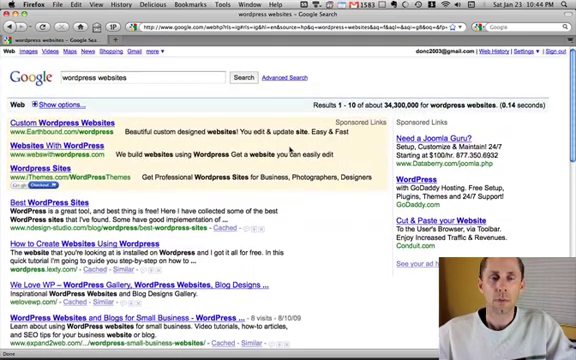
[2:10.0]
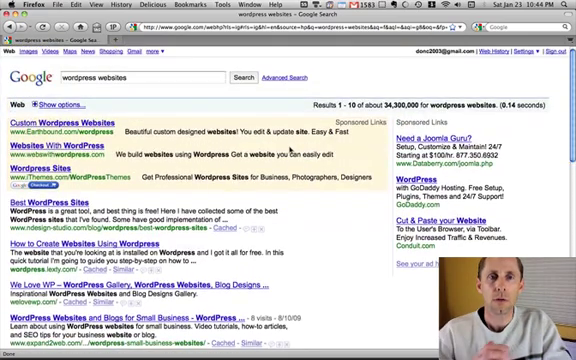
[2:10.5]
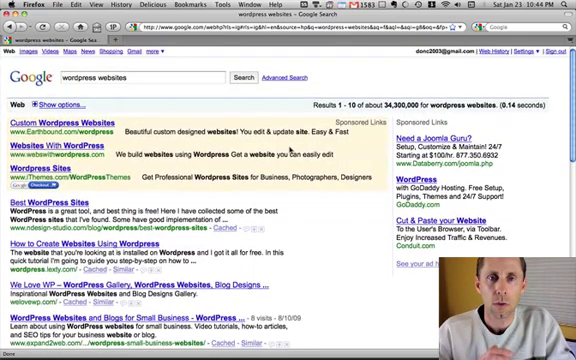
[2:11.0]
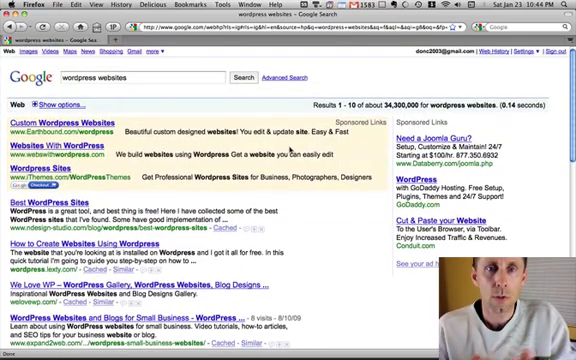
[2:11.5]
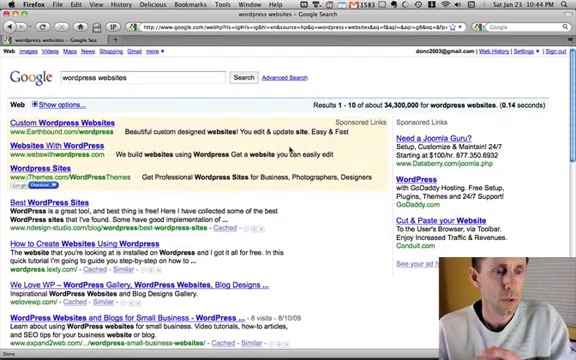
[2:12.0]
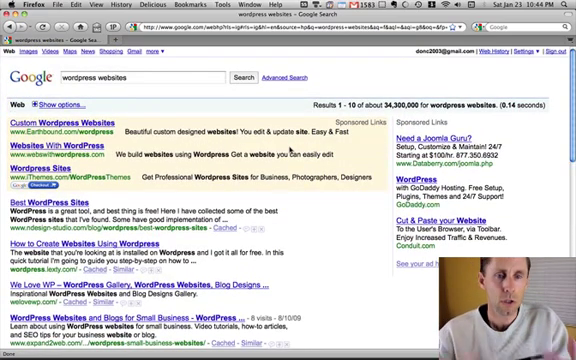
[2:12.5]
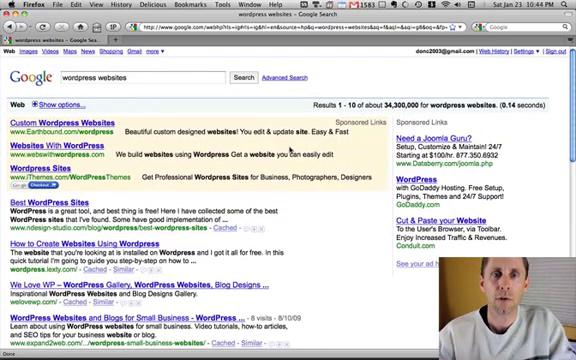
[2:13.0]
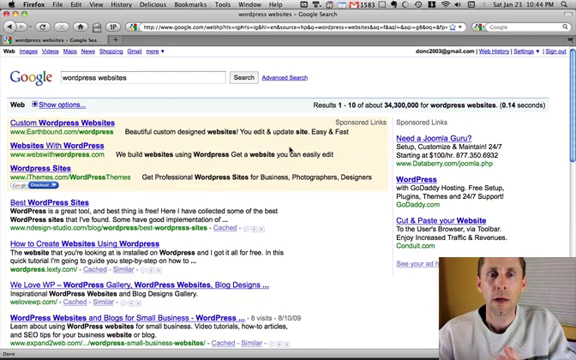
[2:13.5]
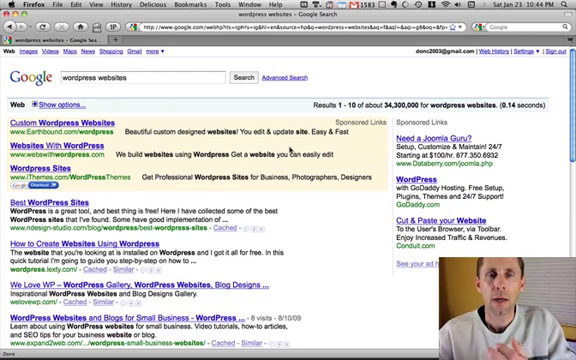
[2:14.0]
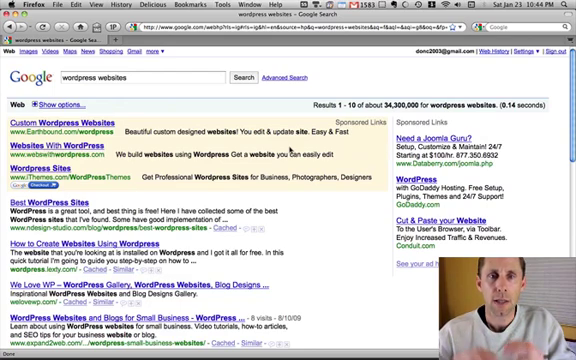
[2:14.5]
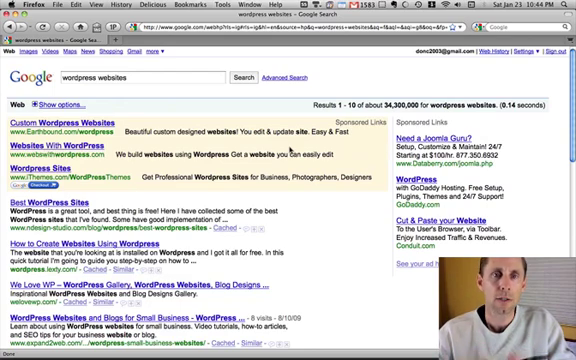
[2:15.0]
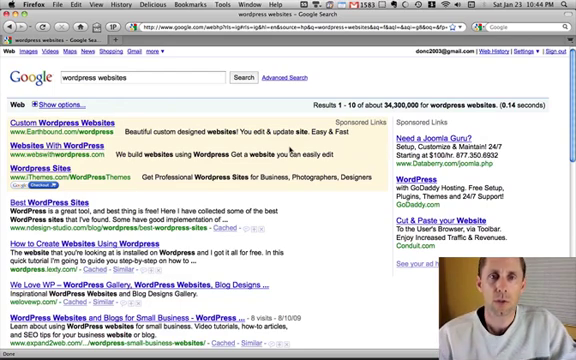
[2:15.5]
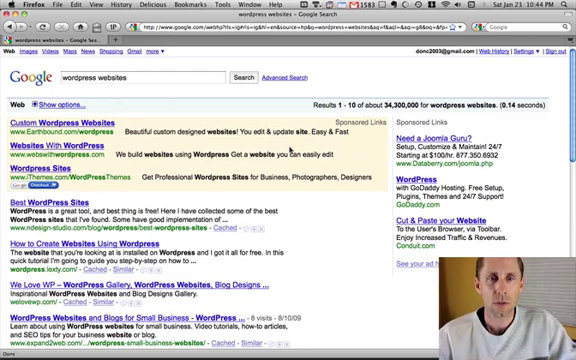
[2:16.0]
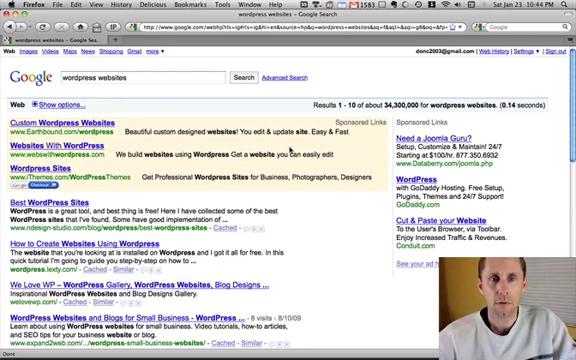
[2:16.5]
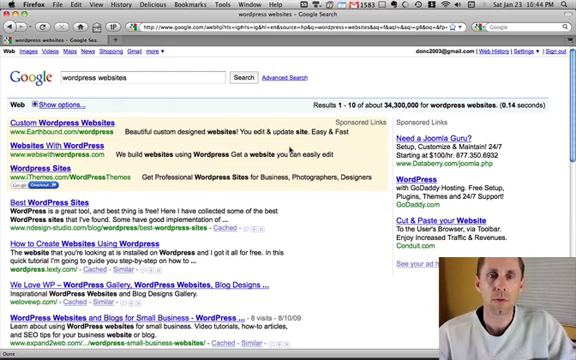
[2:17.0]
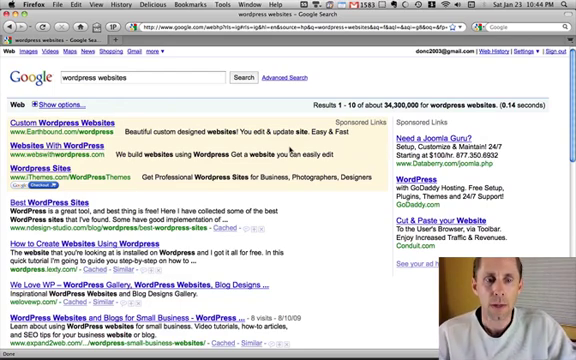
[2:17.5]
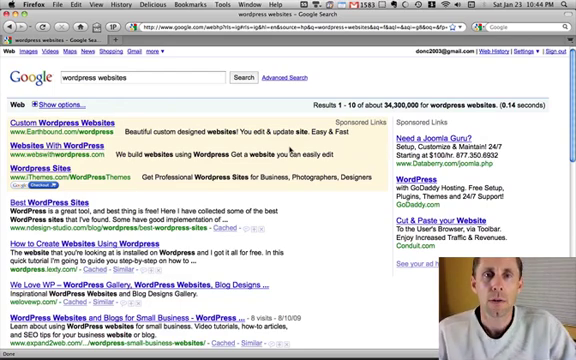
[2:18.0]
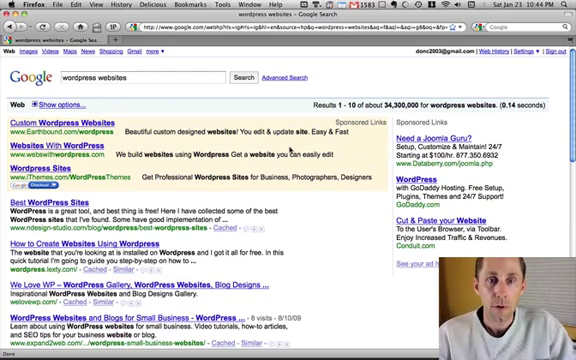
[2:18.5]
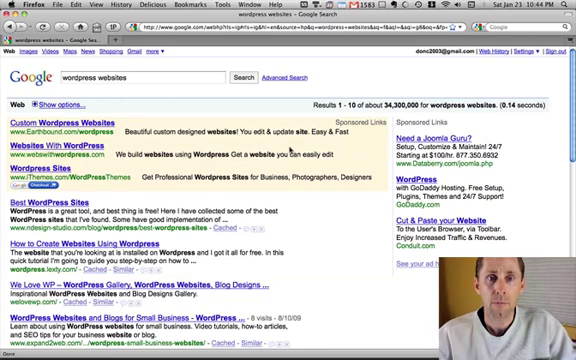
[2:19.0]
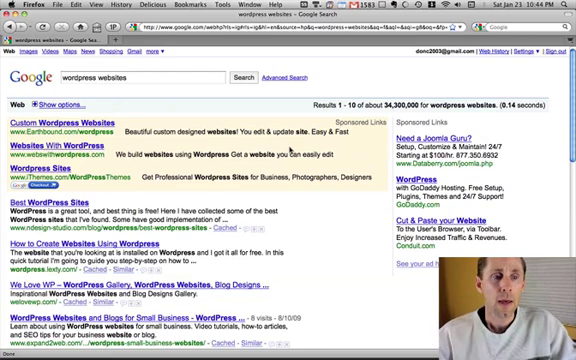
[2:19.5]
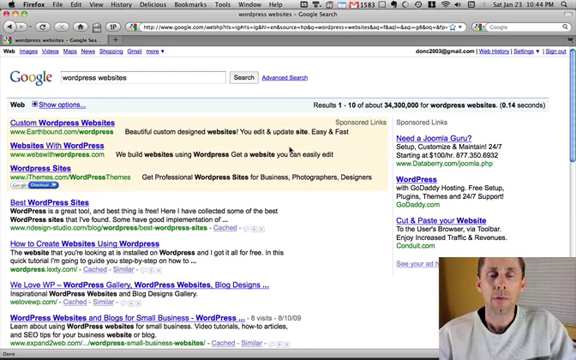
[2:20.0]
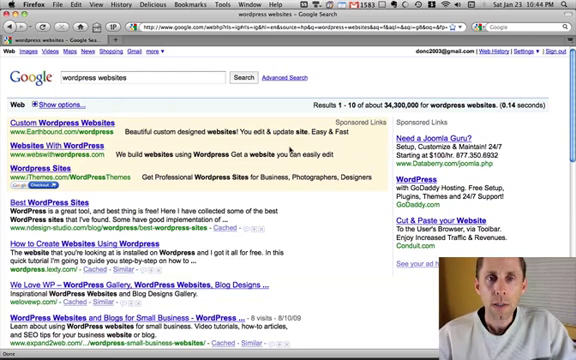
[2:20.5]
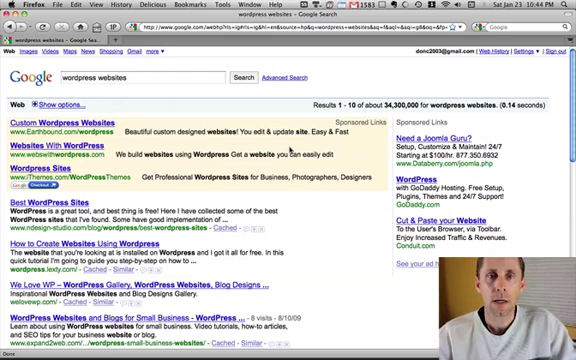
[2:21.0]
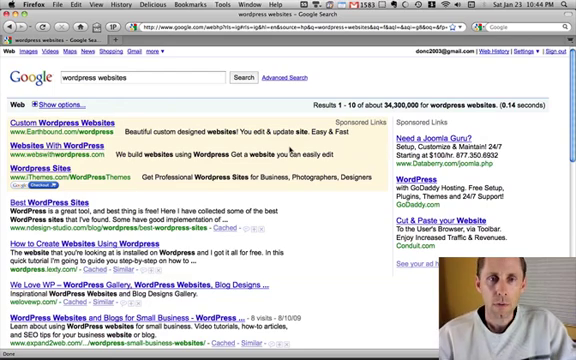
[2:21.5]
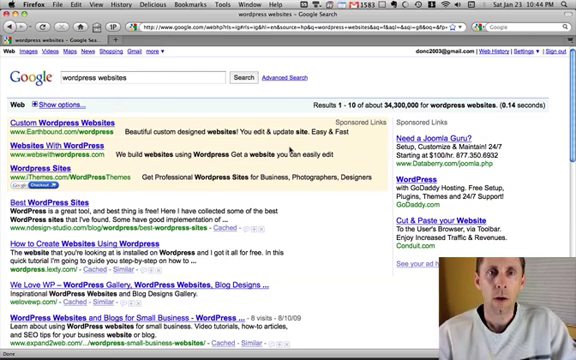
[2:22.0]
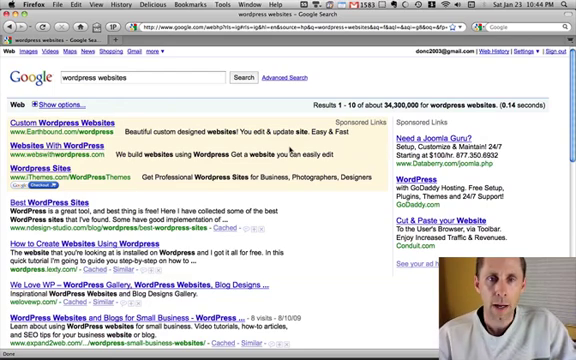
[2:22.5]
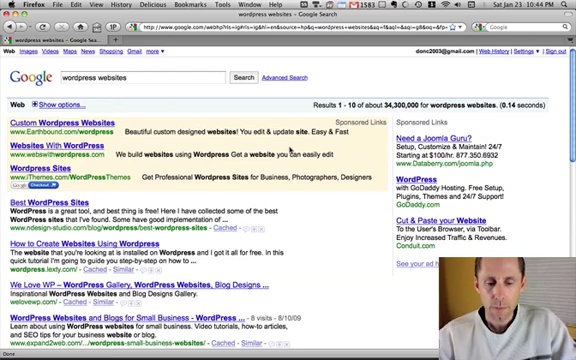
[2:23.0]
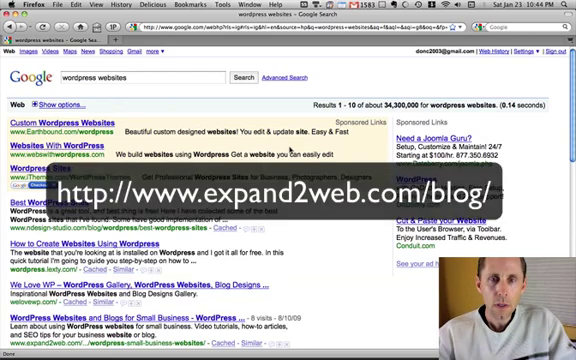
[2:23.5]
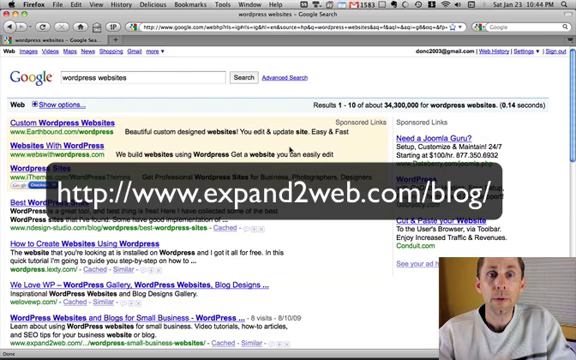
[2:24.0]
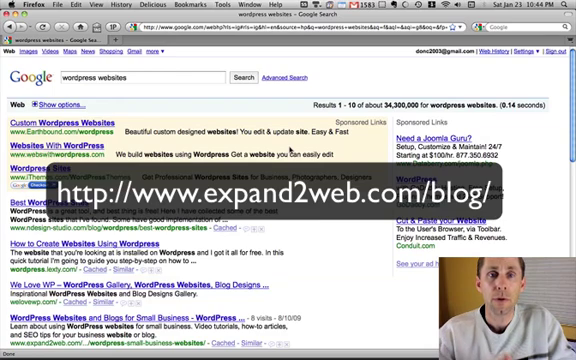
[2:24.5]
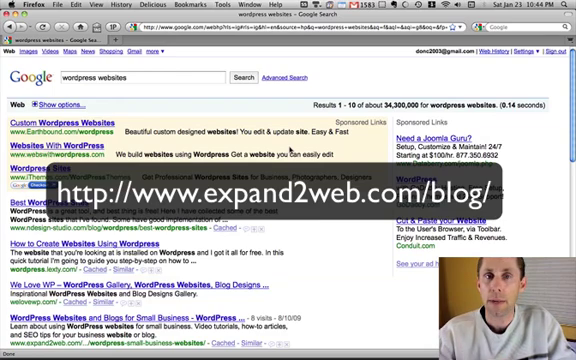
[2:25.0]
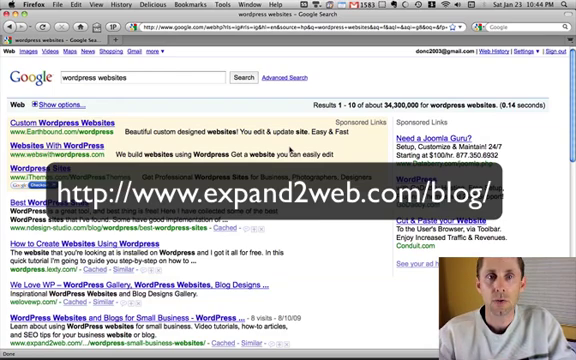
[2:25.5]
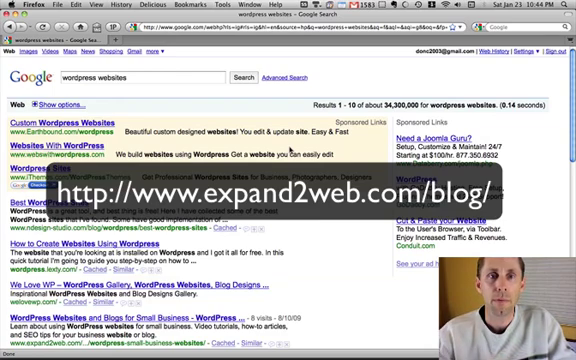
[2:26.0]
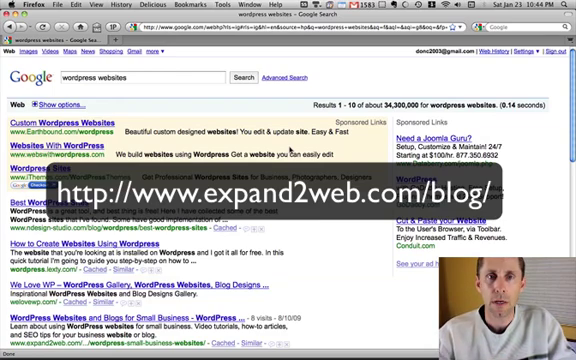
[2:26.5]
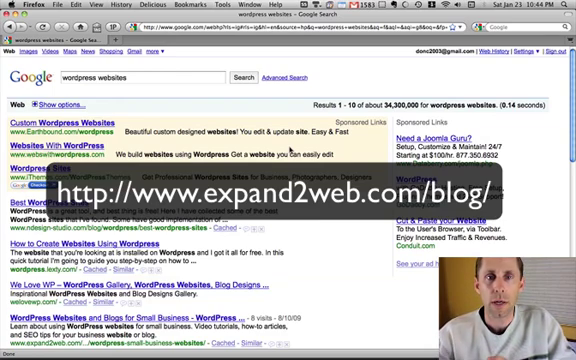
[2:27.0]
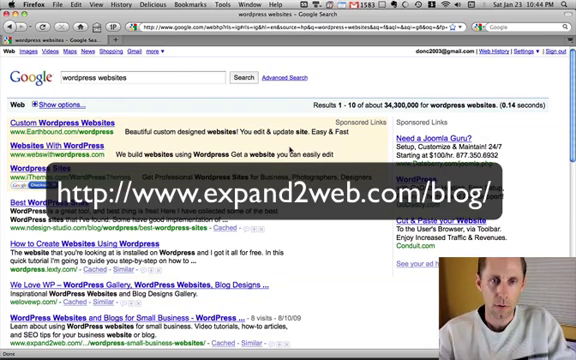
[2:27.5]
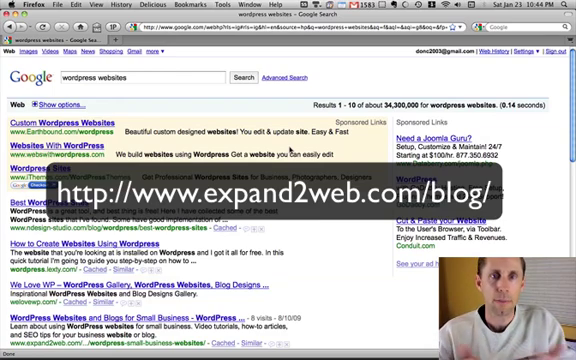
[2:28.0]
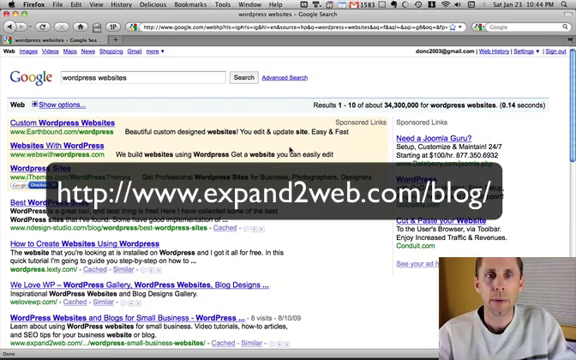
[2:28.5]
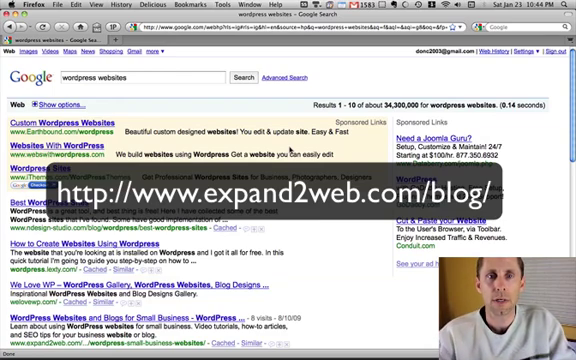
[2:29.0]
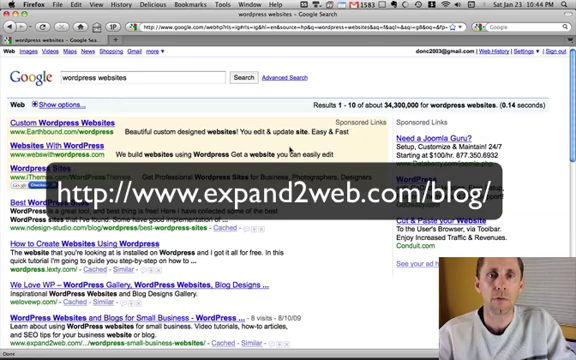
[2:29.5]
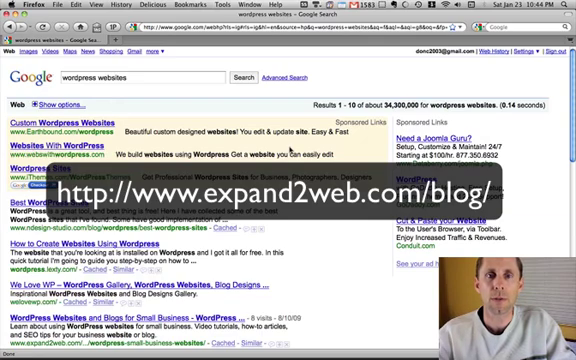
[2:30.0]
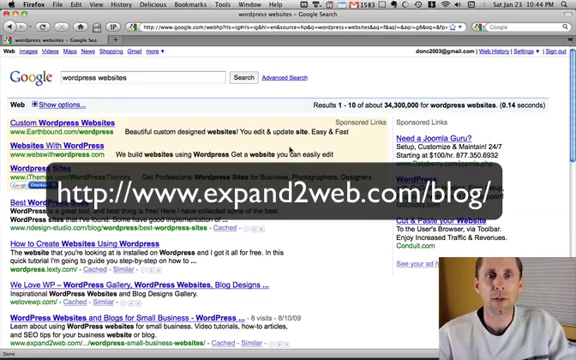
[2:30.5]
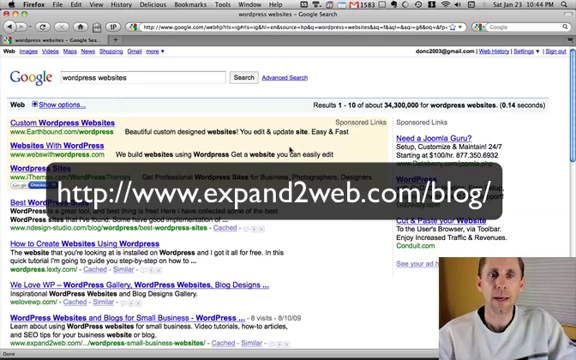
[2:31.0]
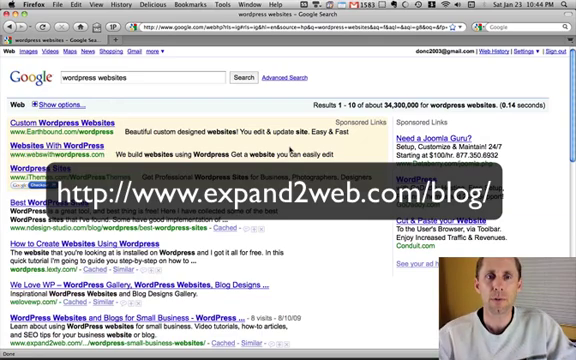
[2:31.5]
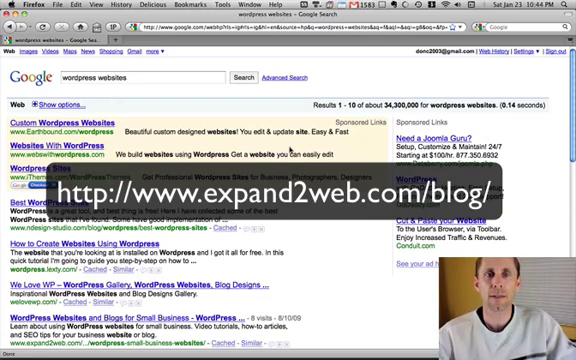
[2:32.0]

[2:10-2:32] The man in the video window in the lower right-hand corner keeps speaking and making hand gestures. The web results have reverted to the second set of results. The screen is zoomed out but still shows the WordPress websites results. As he speaks, a link to his website appears on screen in white text on a black background: "http://www.expand2web.com/blog/". The text box is semi-transparent, so the web results are still visible underneath it. The video ends with the man just staring at the screen while the Firefox page is still being shared.